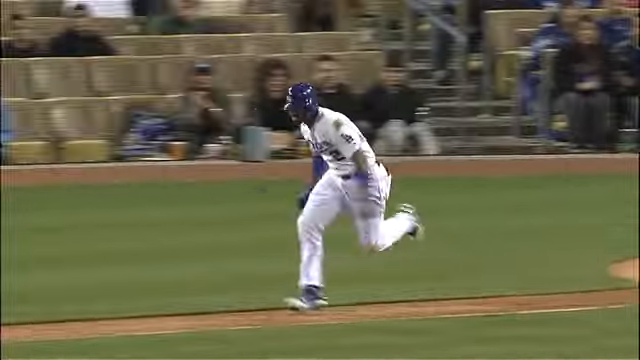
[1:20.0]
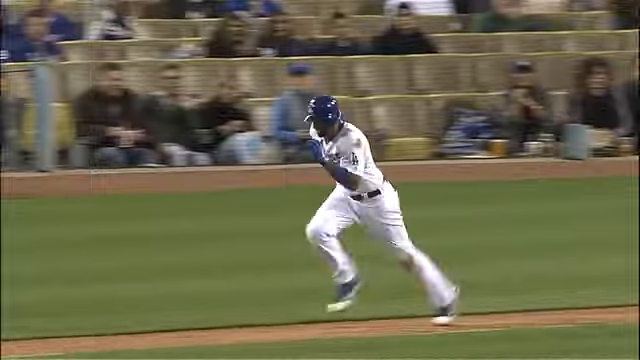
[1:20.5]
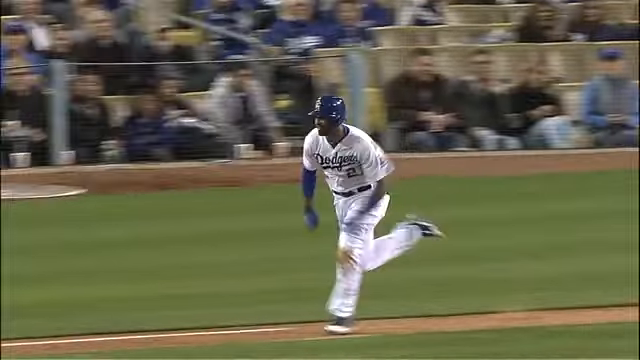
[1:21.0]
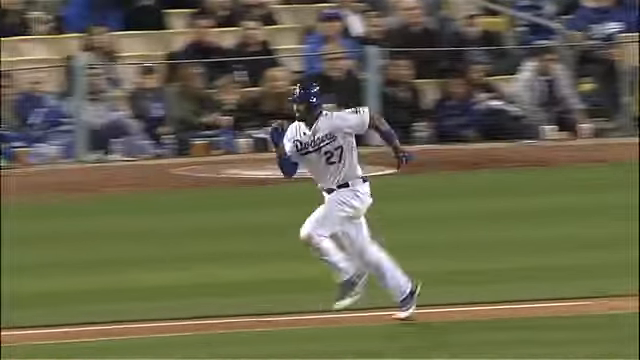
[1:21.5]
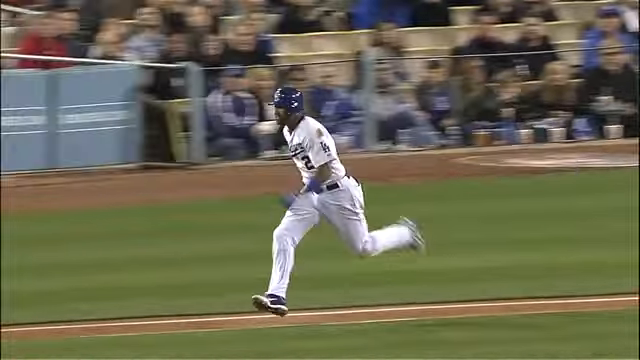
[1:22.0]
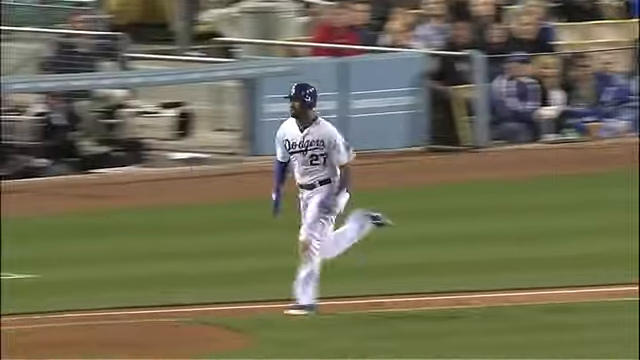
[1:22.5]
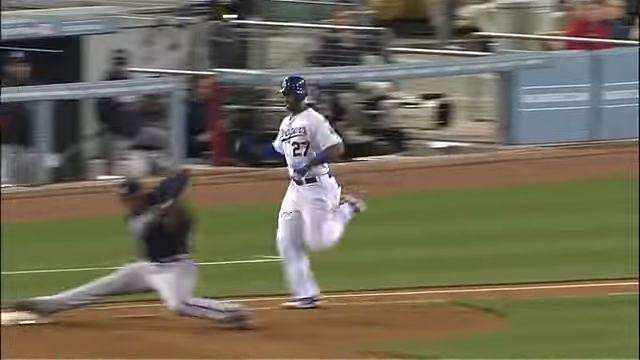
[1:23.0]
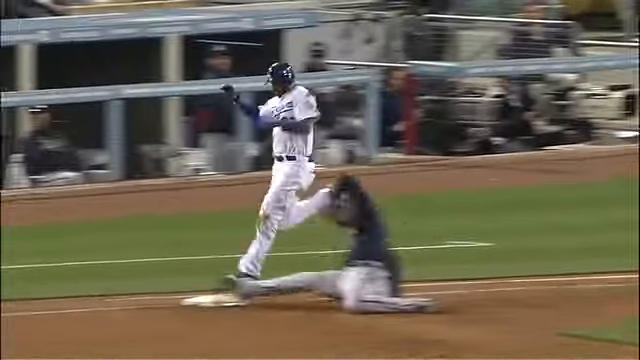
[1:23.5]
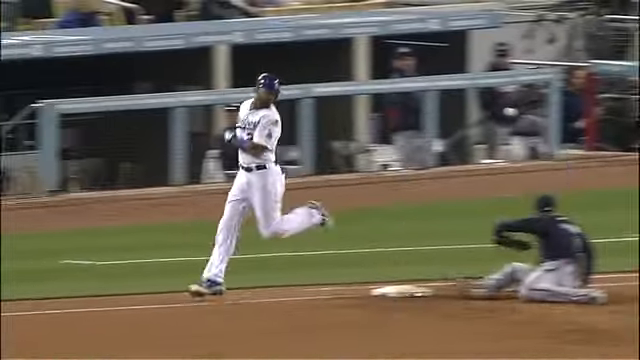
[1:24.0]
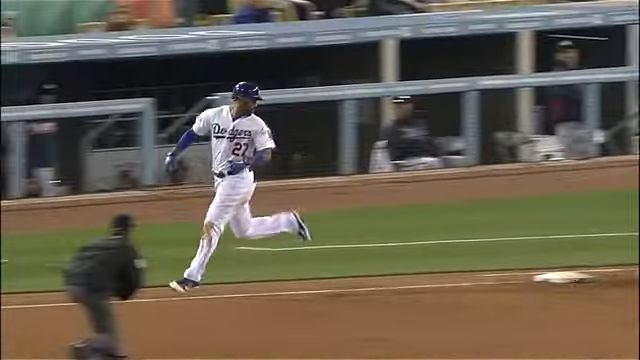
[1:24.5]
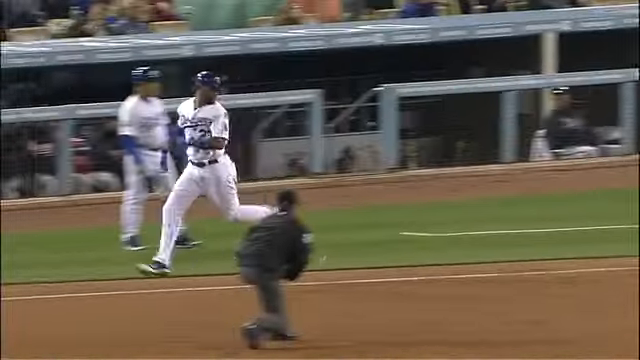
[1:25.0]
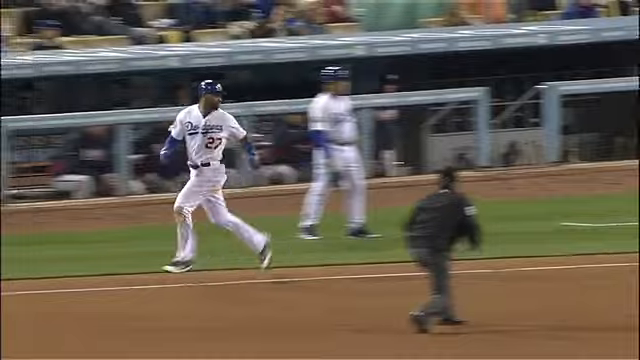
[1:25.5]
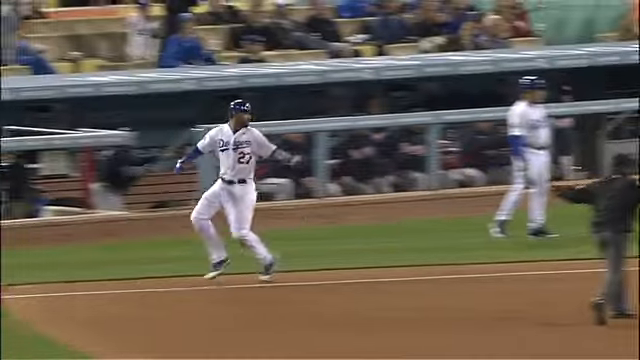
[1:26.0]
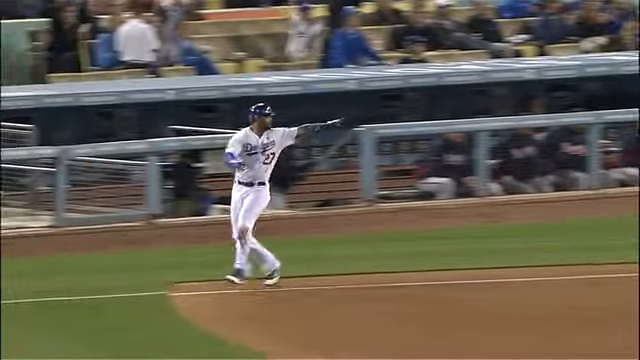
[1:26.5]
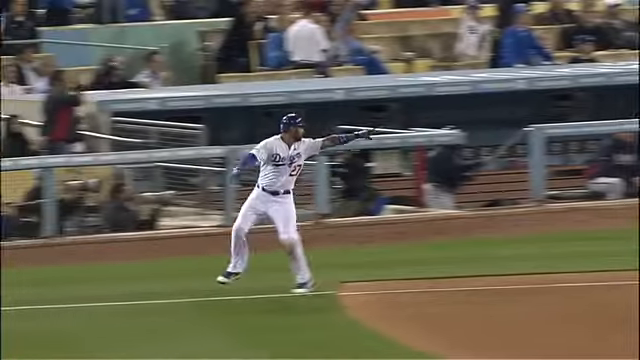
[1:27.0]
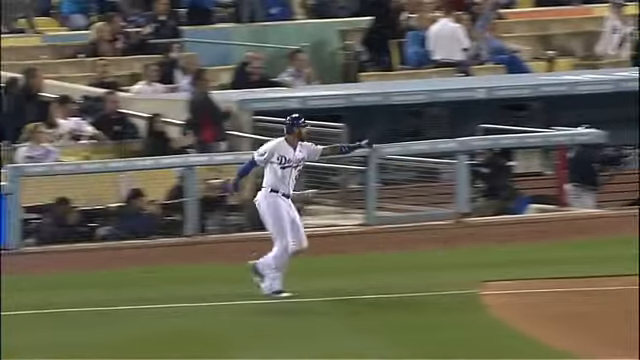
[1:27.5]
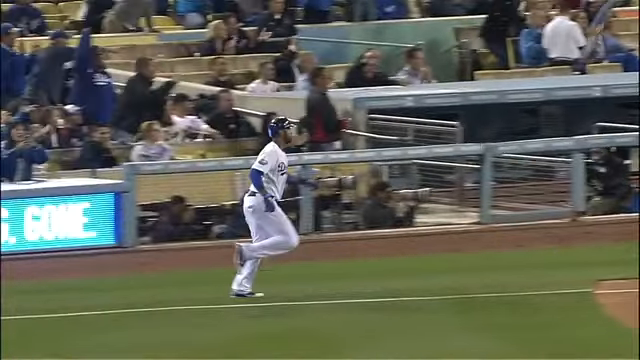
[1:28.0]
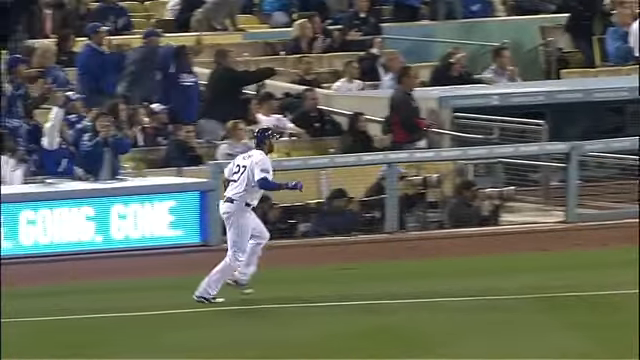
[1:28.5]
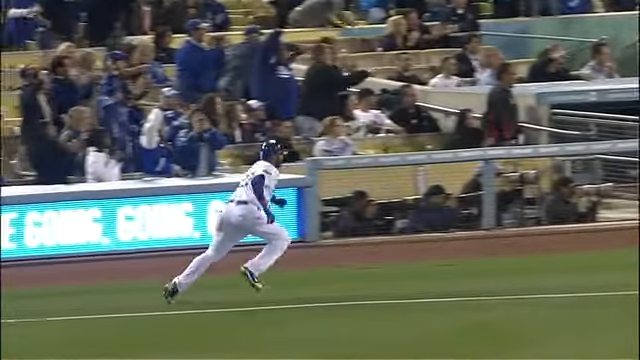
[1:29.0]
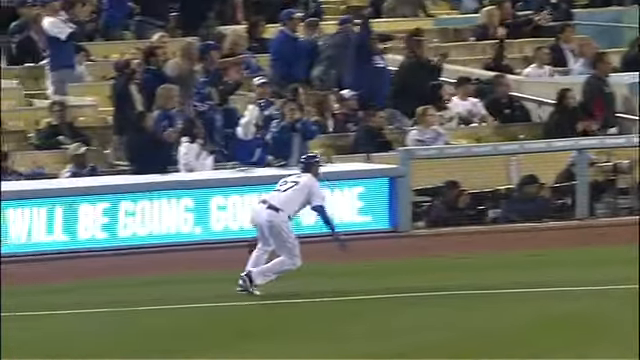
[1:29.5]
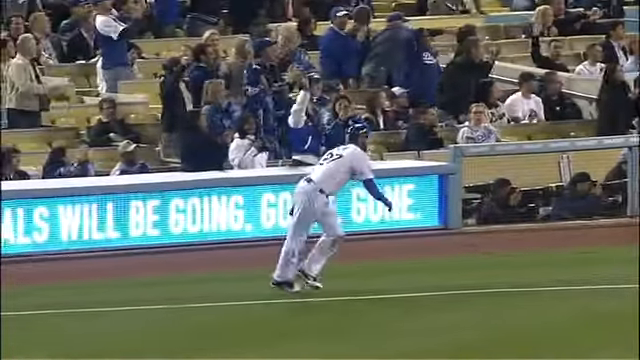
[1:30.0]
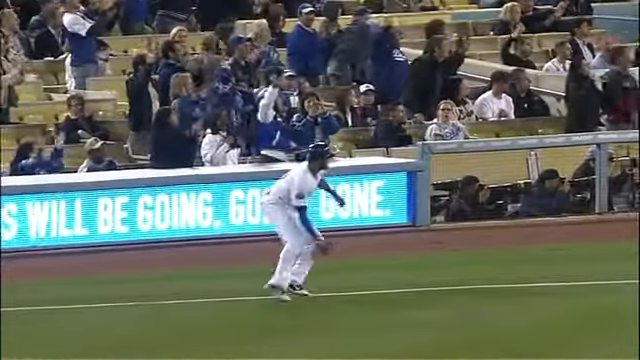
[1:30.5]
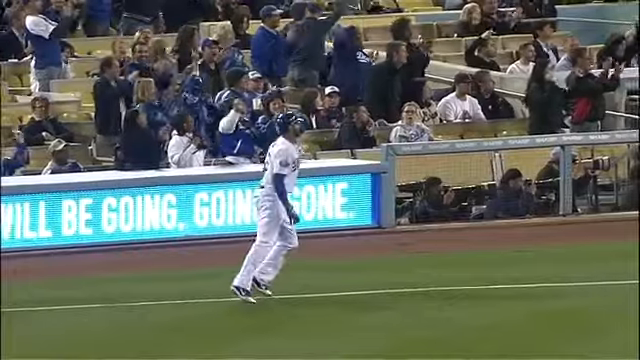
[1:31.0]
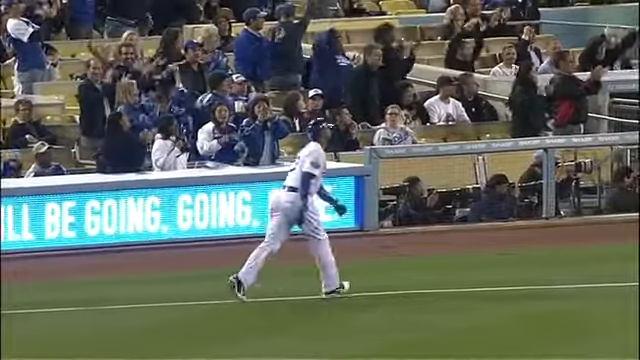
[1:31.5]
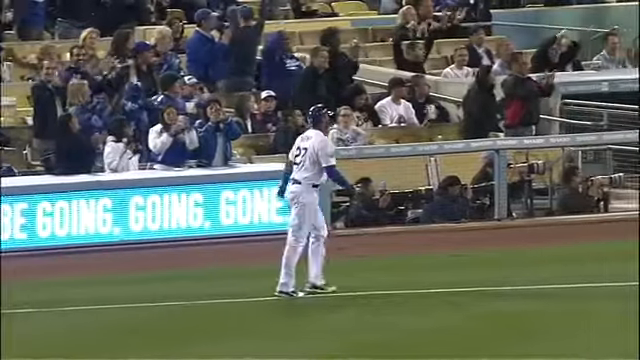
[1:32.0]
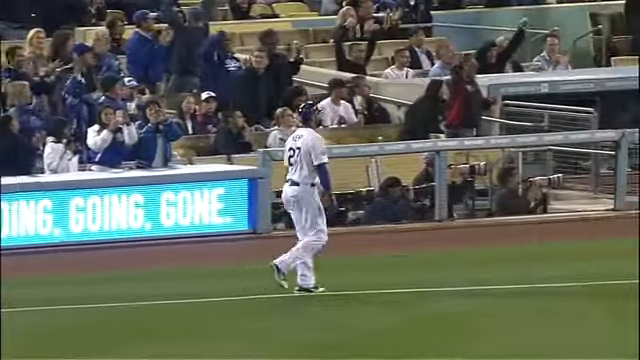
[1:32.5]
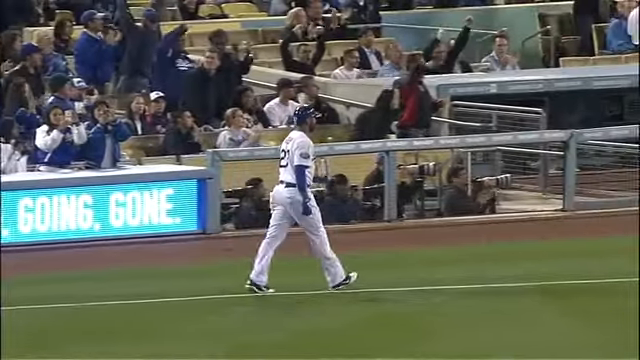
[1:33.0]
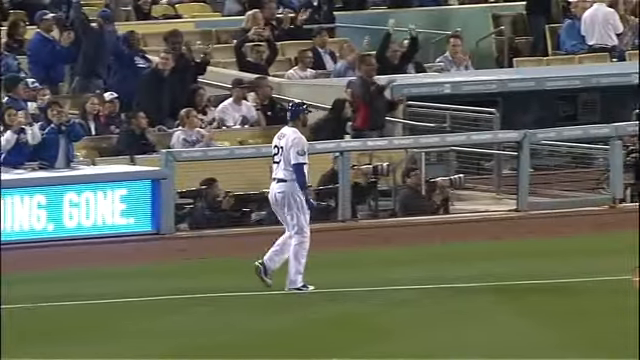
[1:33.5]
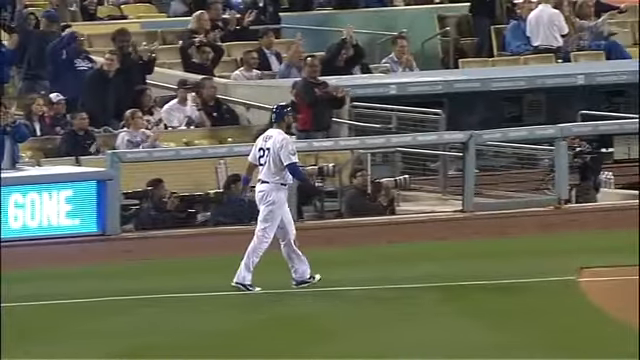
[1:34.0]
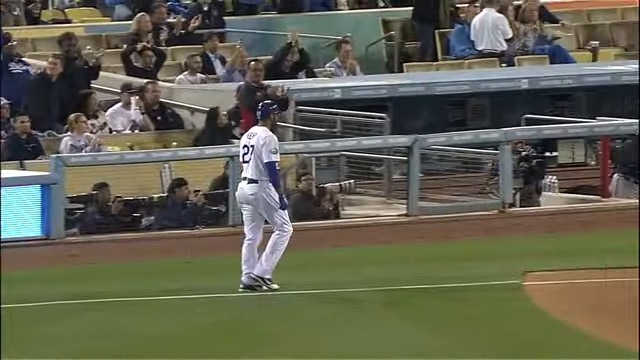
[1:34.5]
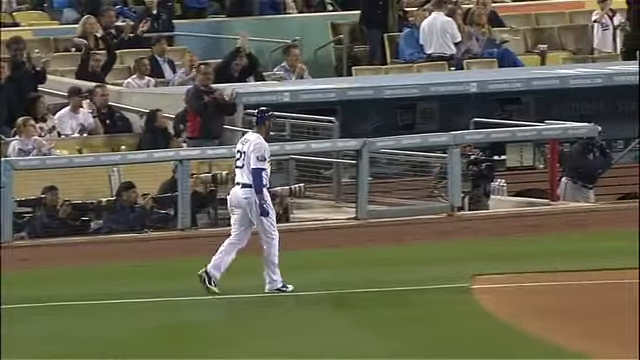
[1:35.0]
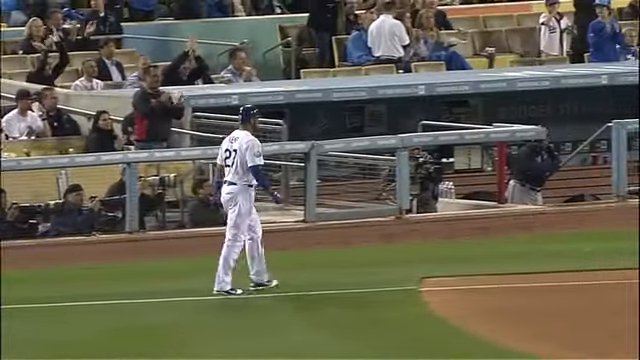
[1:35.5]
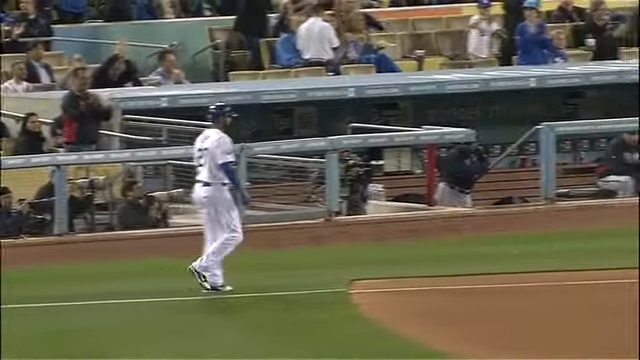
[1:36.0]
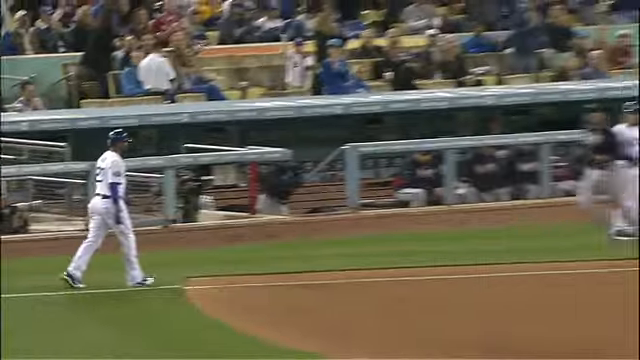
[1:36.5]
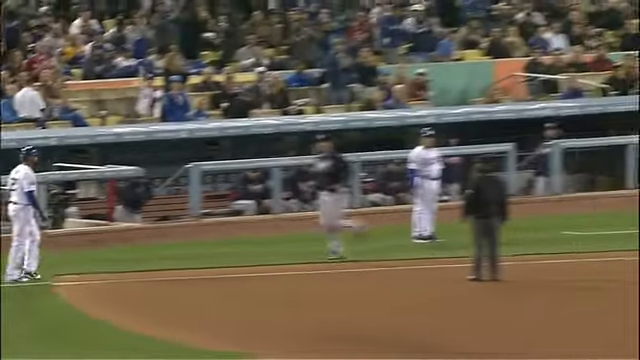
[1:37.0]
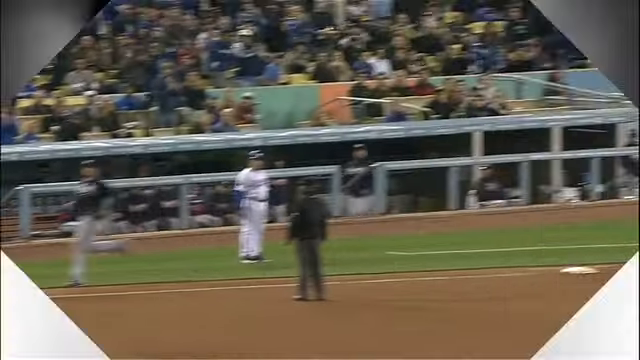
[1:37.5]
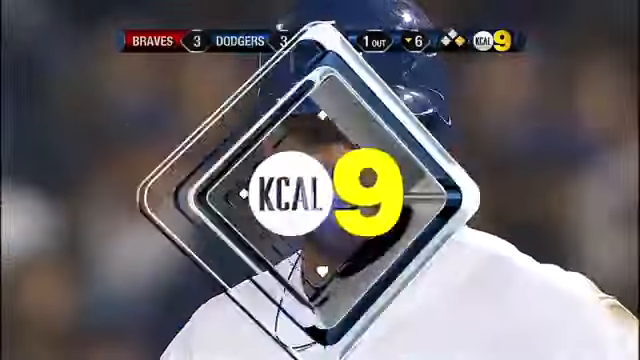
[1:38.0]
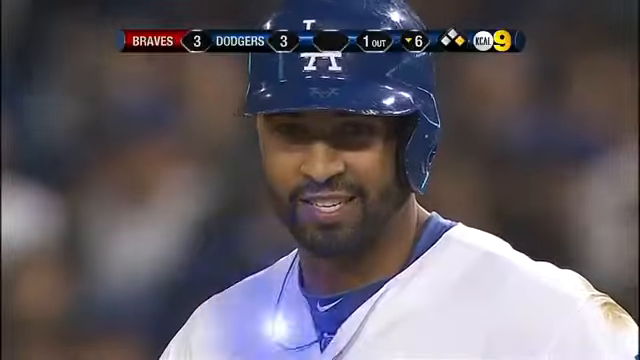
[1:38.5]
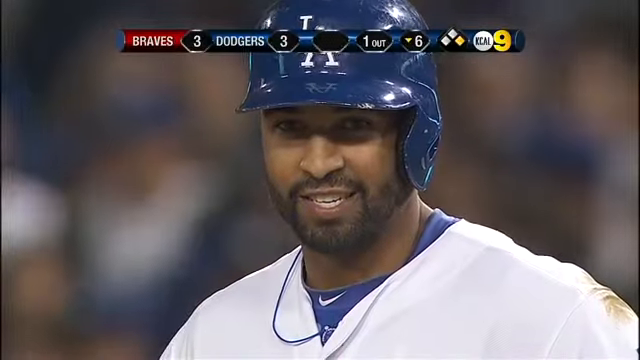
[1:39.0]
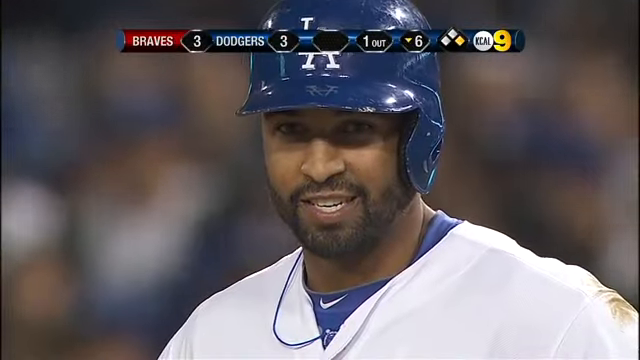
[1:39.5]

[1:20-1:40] In a broadcast of a baseball game, the camera follows to the left a Black man in the bottom center of the screen wearing a Dodgers uniform: a white jersey and white pants with red and blue writing across the front, the number 27, a dark blue batting helmet, and what looks like blue gloves. He sprints toward the left, maybe to third based on his angle. He runs through the base, turns around, points back at the base, and yells something, likely arguing about whether he was safe. He then stops himself and slowly walks toward the right, no longer talking or being aggressive as far as can be seen. The camera cuts to a close shot from the shoulders to the top of the head of a bearded baseball player wearing a medium blue helmet and a white jersey with a blue collar, who grins slightly.